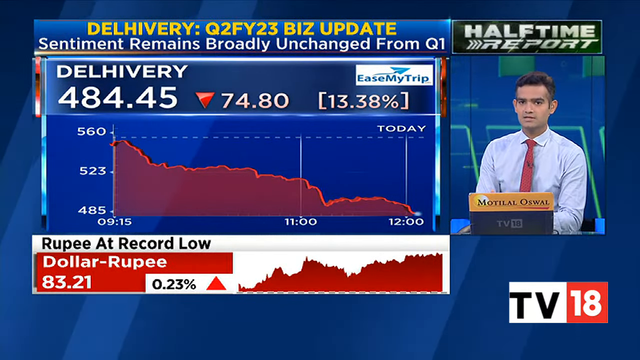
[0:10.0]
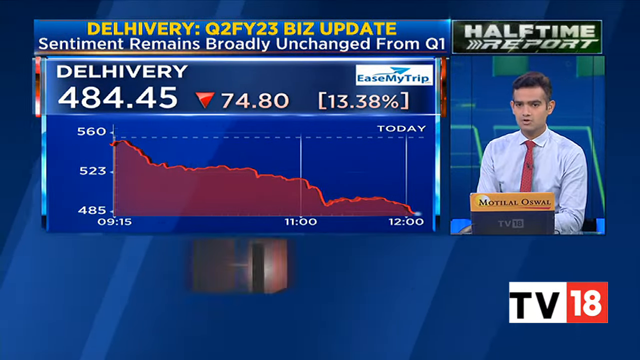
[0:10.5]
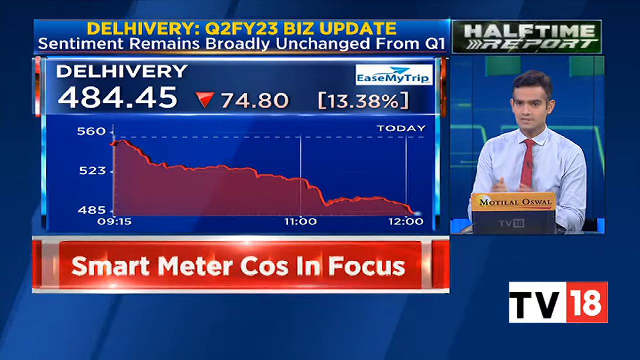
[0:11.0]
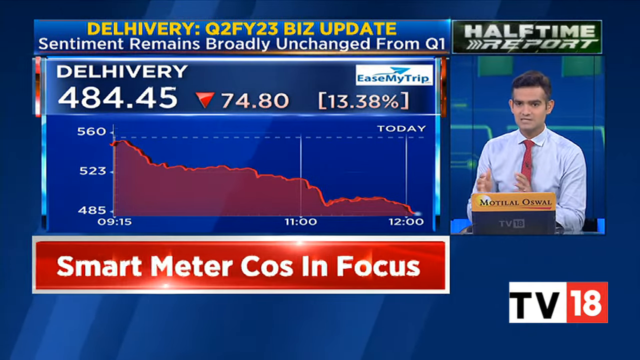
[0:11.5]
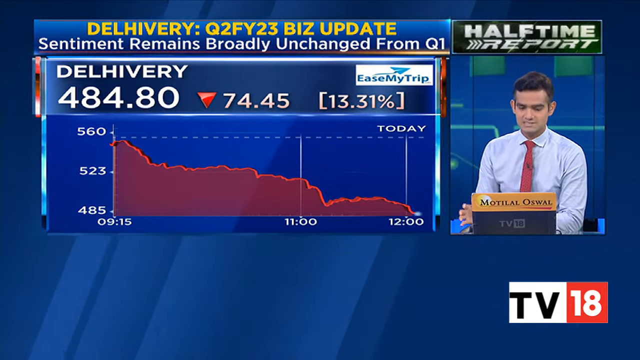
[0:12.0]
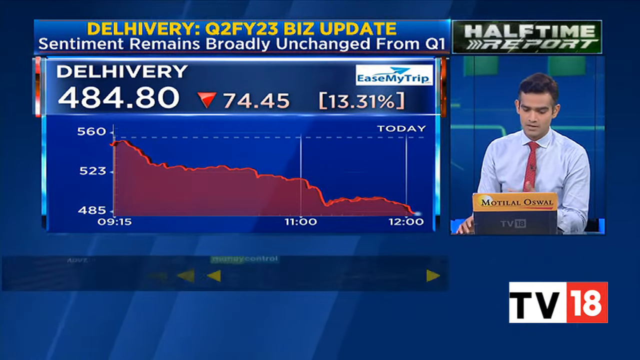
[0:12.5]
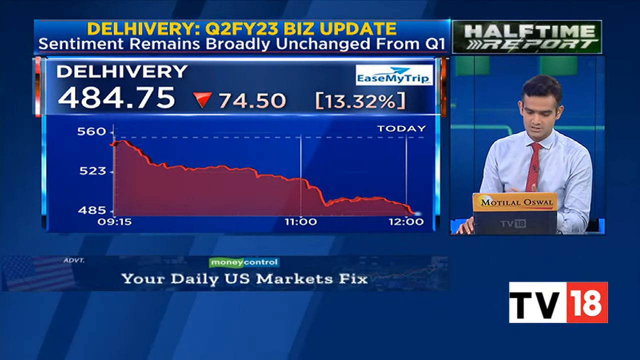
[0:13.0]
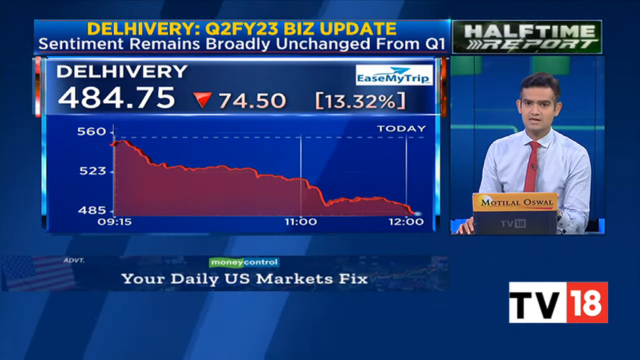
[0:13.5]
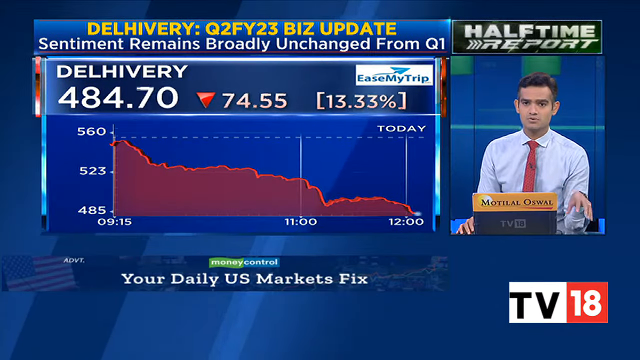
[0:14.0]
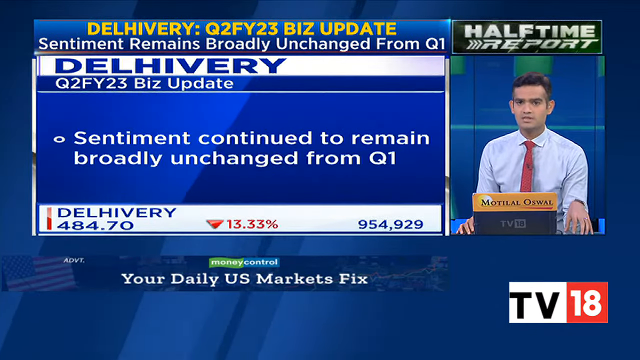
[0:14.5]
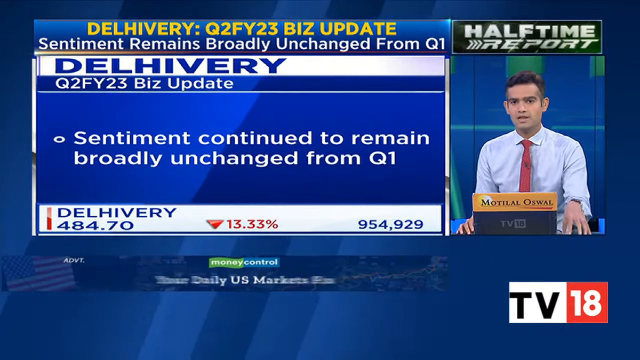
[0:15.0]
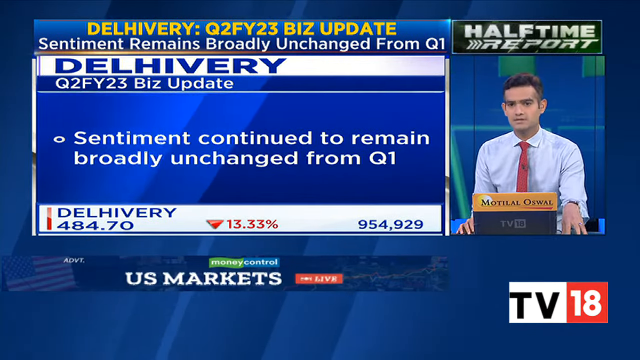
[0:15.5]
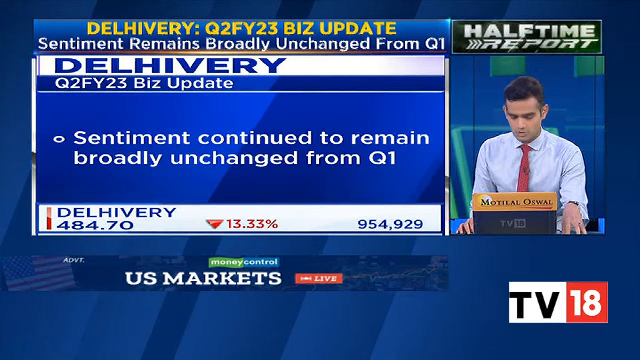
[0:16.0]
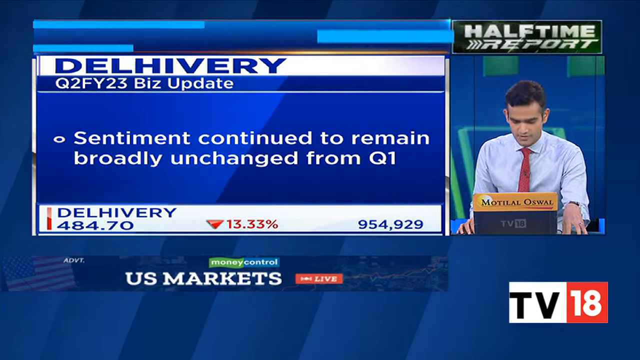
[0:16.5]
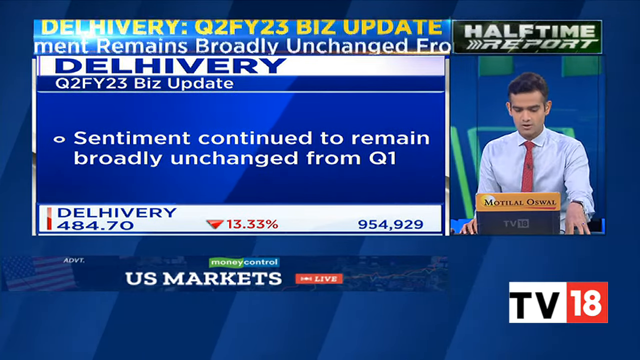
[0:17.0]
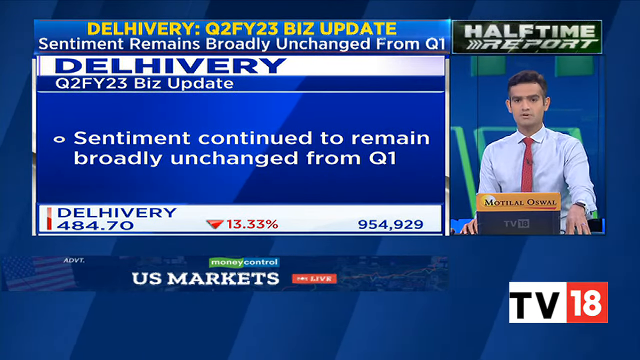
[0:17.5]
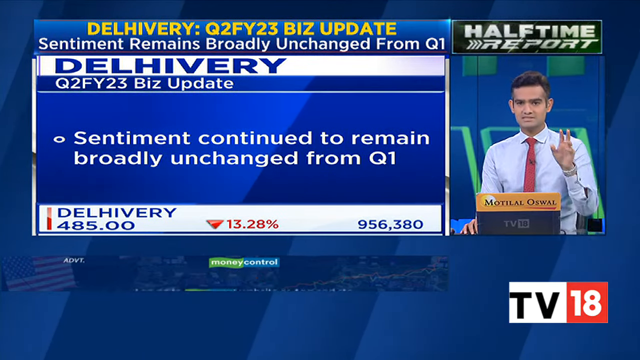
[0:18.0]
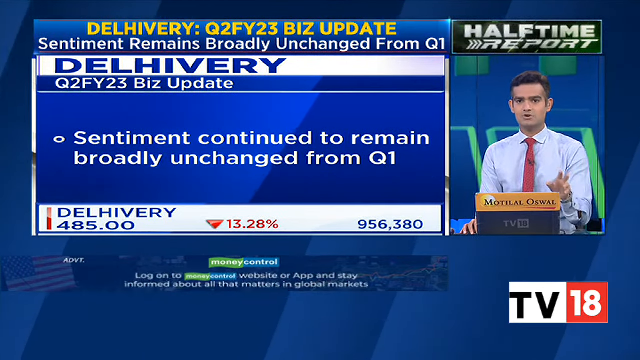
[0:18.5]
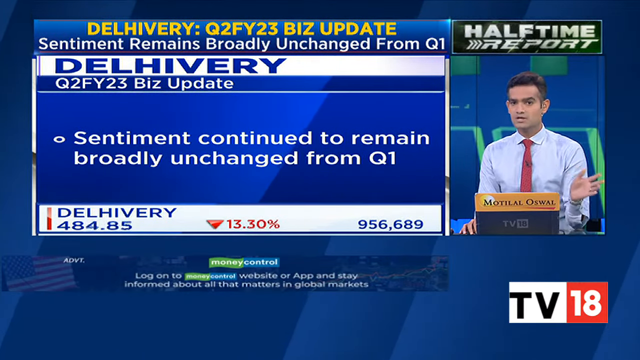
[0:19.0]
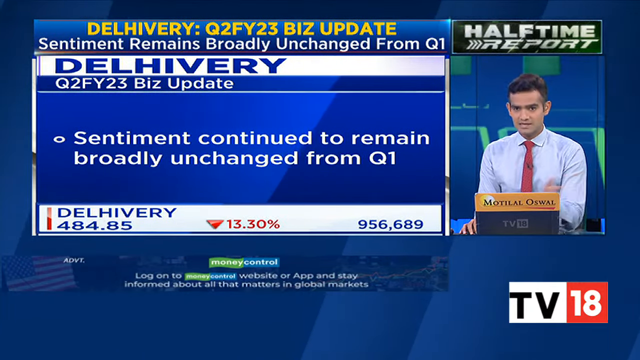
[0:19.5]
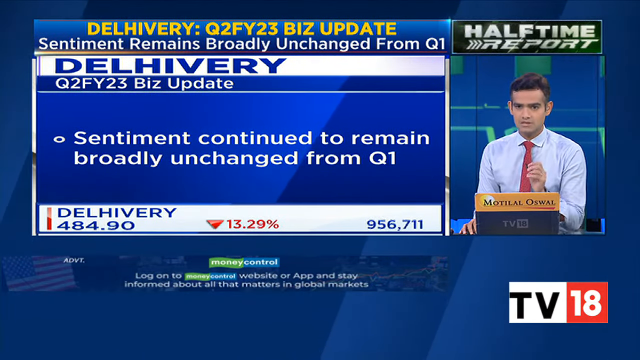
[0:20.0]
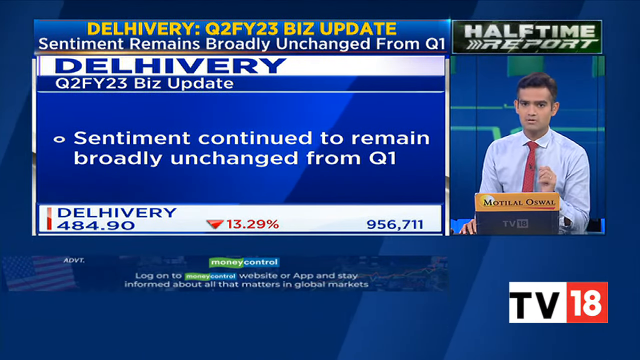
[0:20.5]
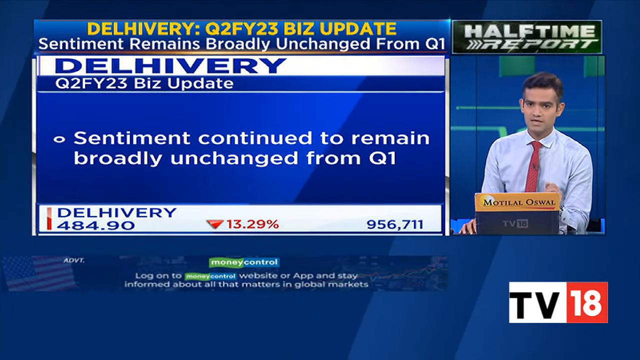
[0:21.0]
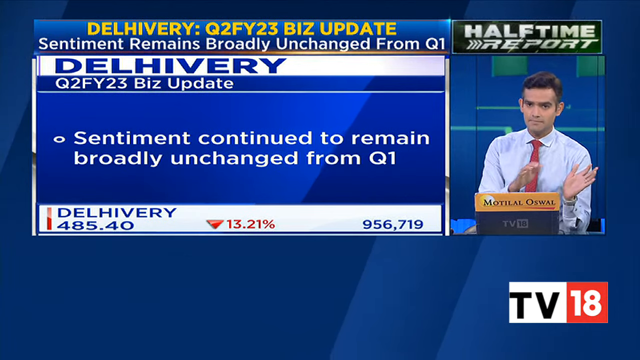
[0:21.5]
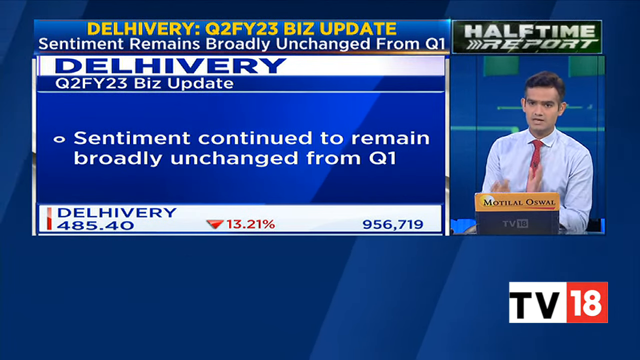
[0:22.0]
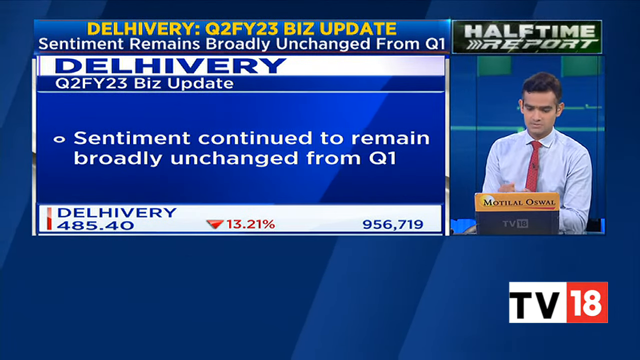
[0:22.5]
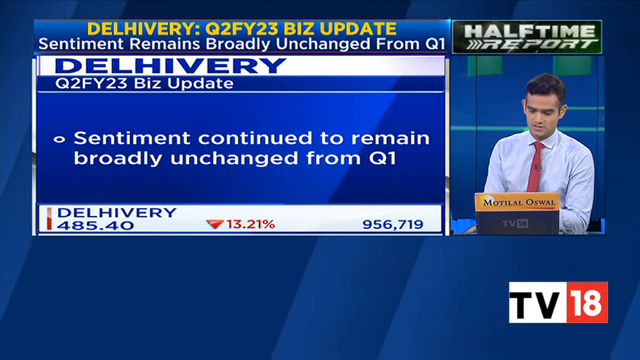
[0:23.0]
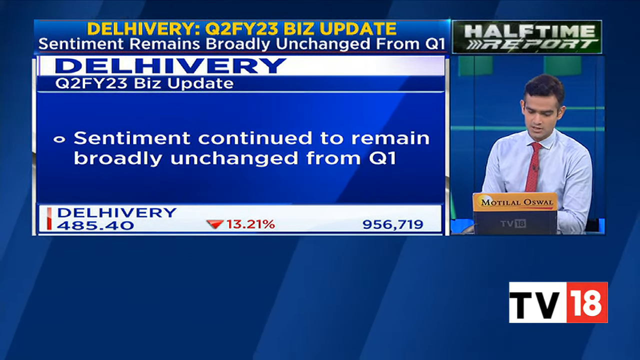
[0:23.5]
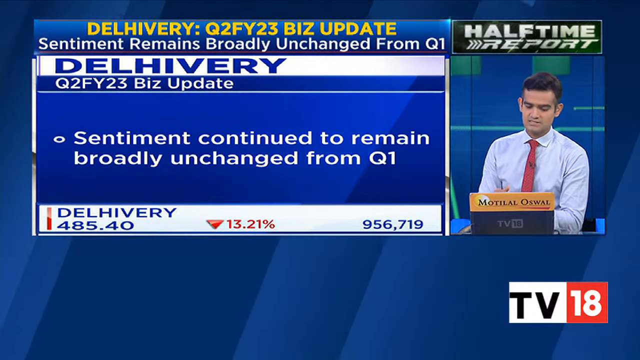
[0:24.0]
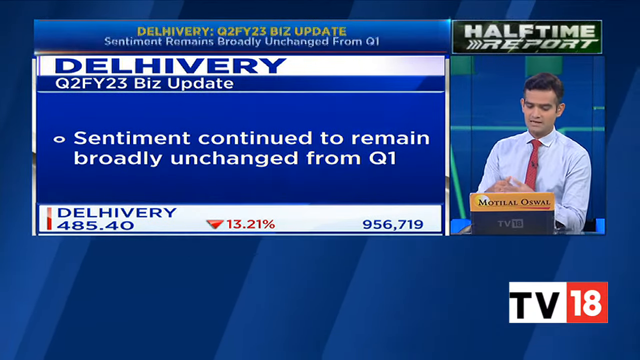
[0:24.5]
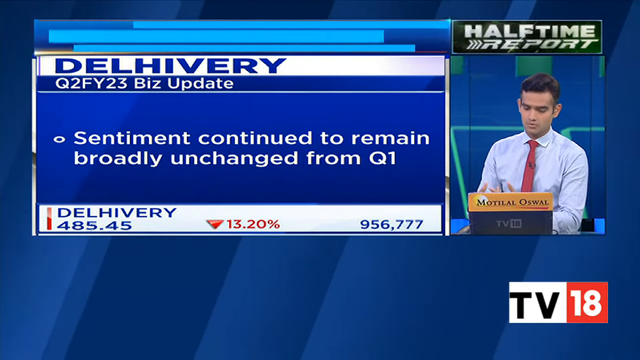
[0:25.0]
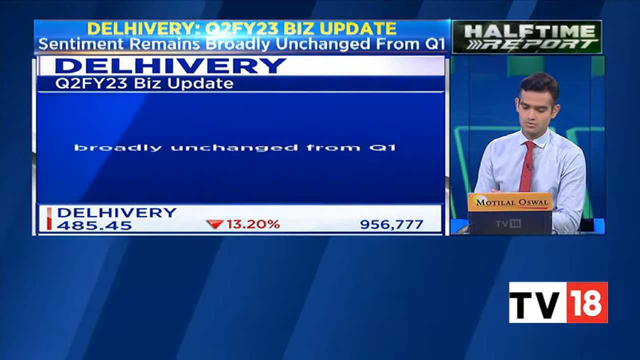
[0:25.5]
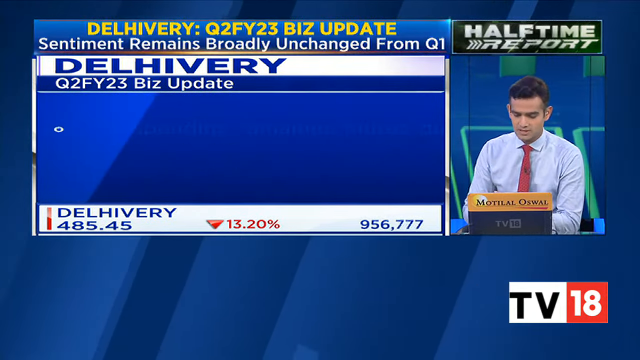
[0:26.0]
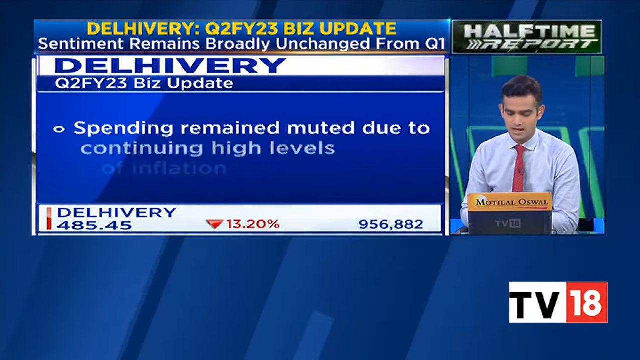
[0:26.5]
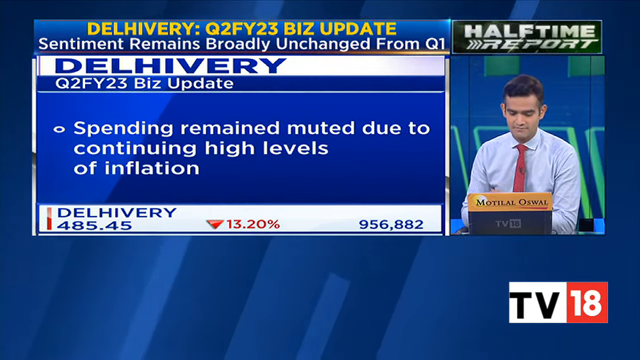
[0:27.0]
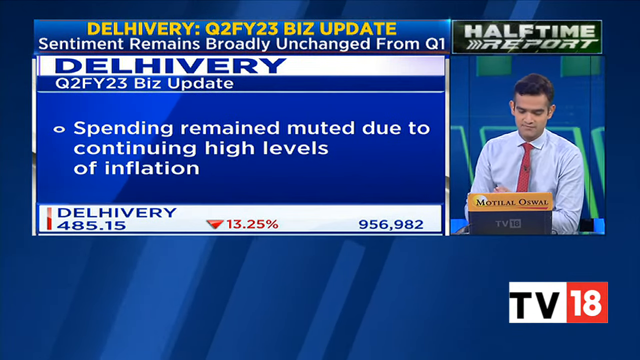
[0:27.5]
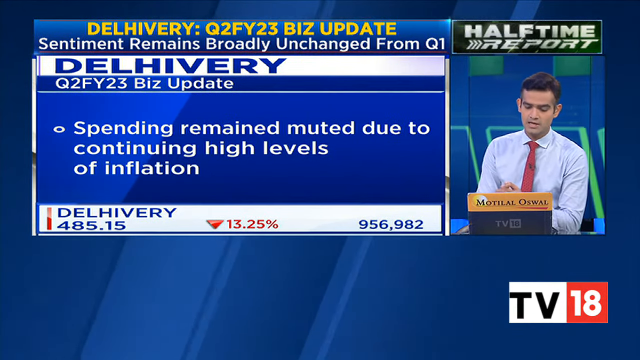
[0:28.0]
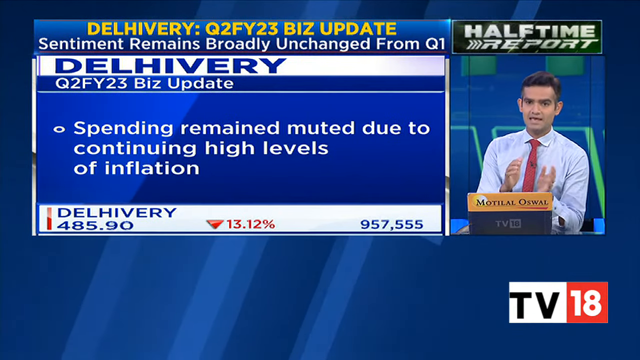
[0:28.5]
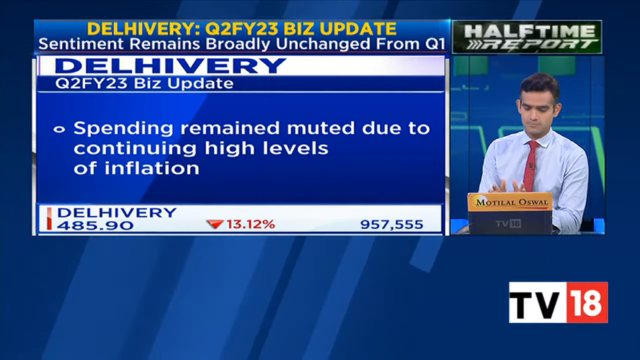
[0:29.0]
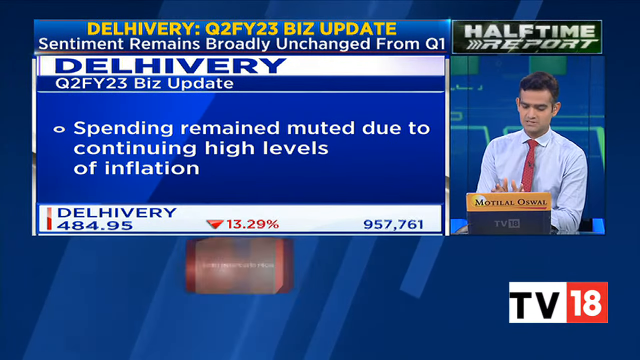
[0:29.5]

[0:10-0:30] Text indicating that this is the "halftime report" appears over the box containing the man, and a small TV 18 symbol is at the bottom. The rupee is shown at an all-time low, and the delivery stock is going down, having already decreased about $75, or 13.33%, today. A note, most likely from experts, says that "the sentiment continued to remain broadly unchanged from Q1." This looks to be a stock report. The blue background has multiple changing lines and some light blue bars with dark blue shadows. Yellow text at the very top reads "delivery Q2 FY 23 biz update," with more of the business update below it in a blue box. A white banner contains the word "delivery" in blue, and the business update reads "Spending remain muted due to continuing high levels of inflation."